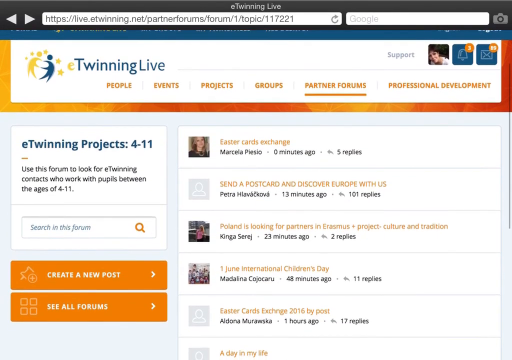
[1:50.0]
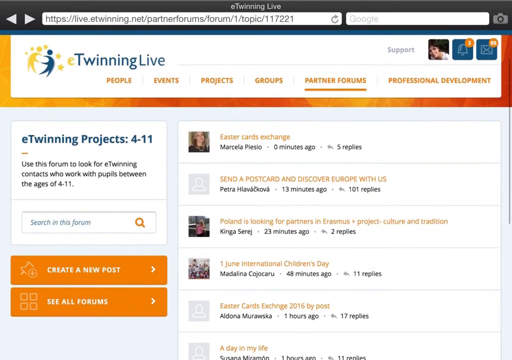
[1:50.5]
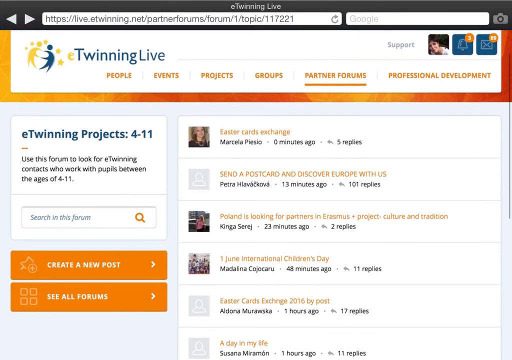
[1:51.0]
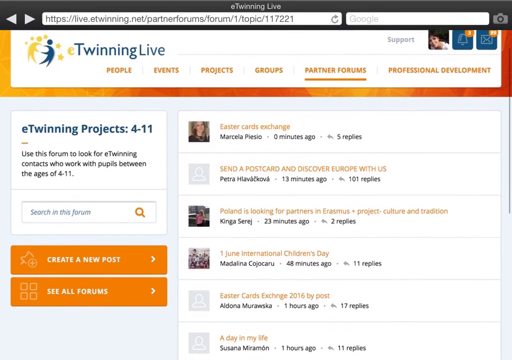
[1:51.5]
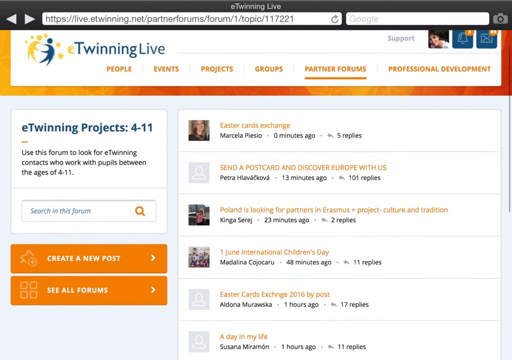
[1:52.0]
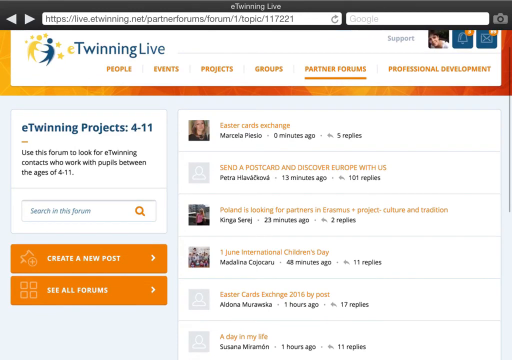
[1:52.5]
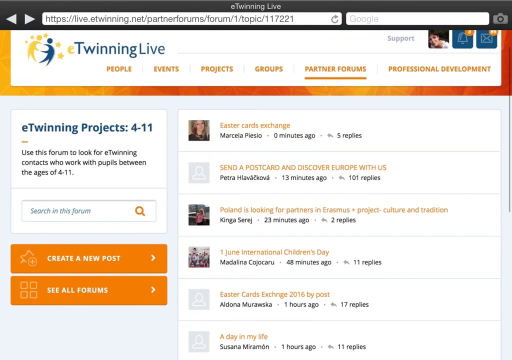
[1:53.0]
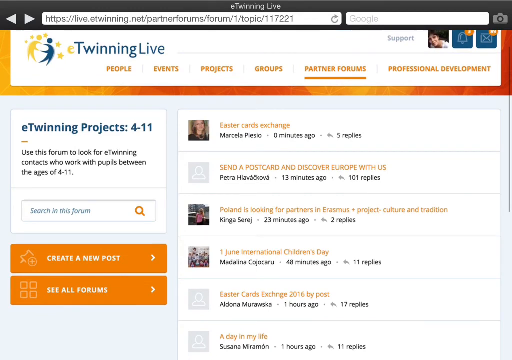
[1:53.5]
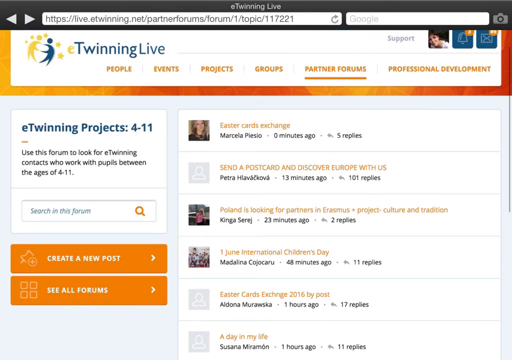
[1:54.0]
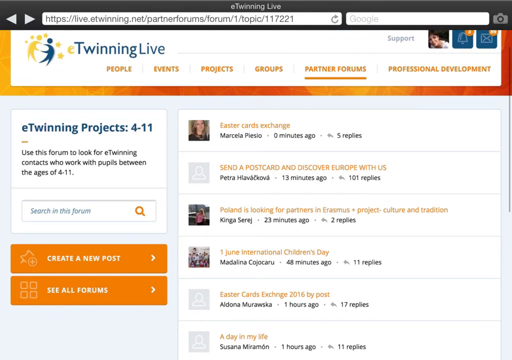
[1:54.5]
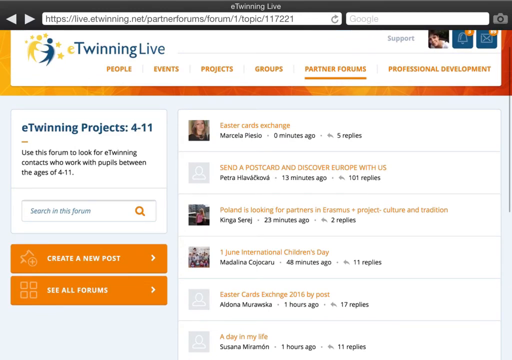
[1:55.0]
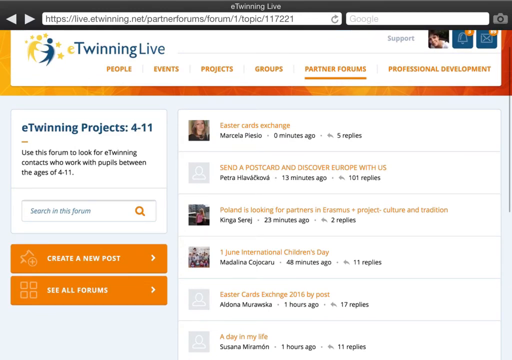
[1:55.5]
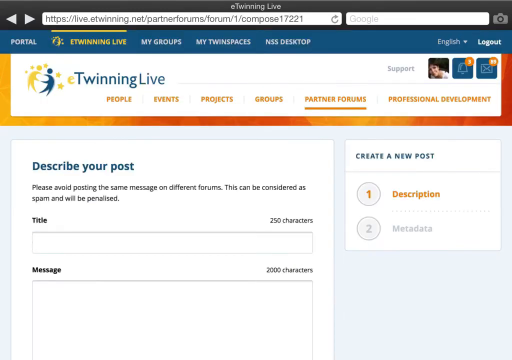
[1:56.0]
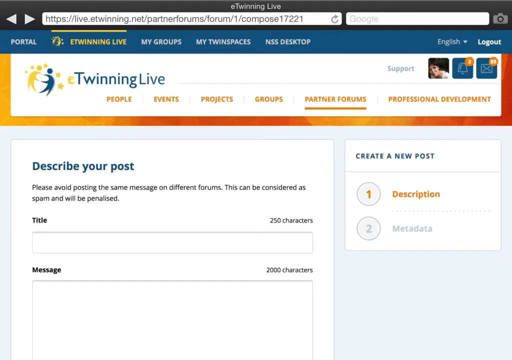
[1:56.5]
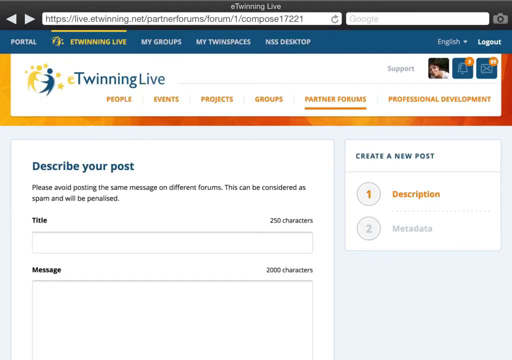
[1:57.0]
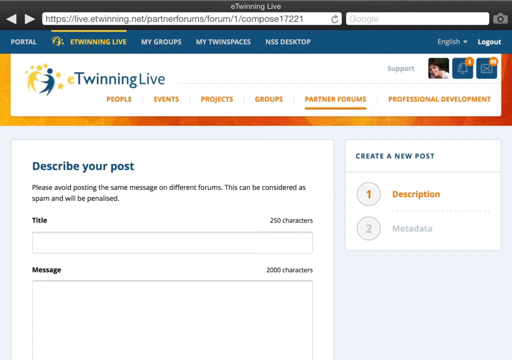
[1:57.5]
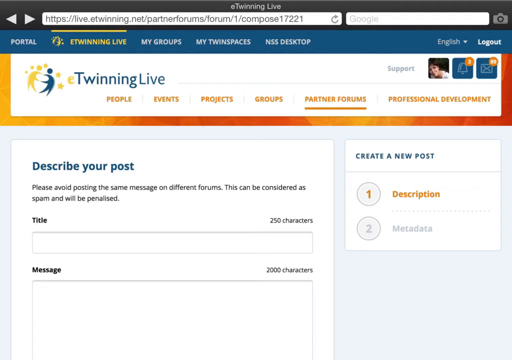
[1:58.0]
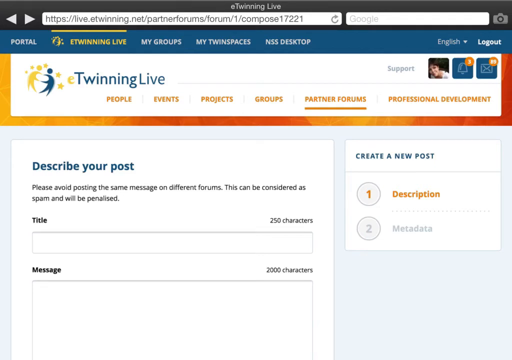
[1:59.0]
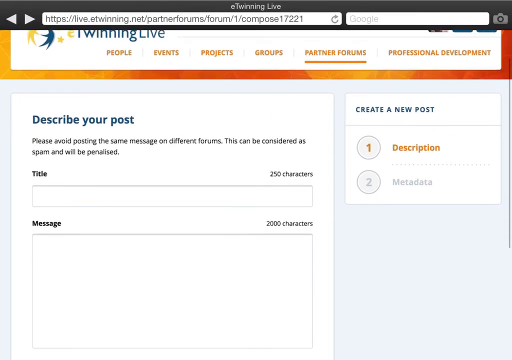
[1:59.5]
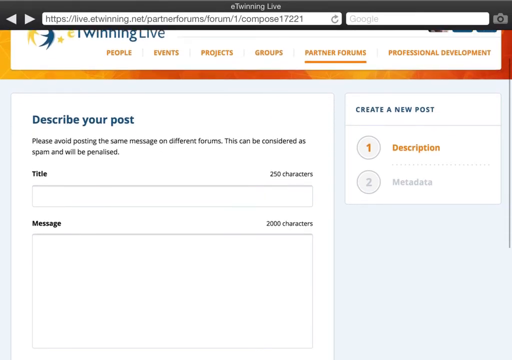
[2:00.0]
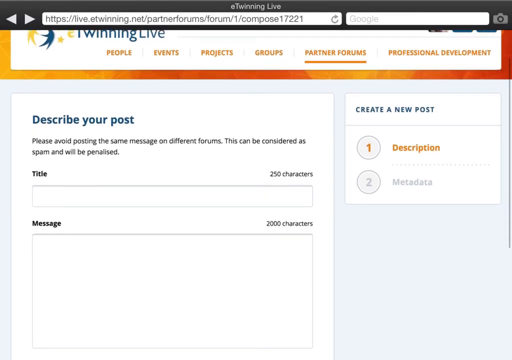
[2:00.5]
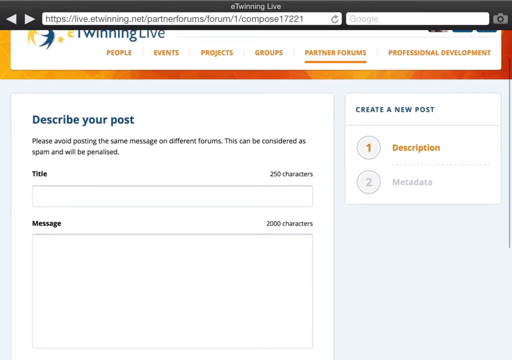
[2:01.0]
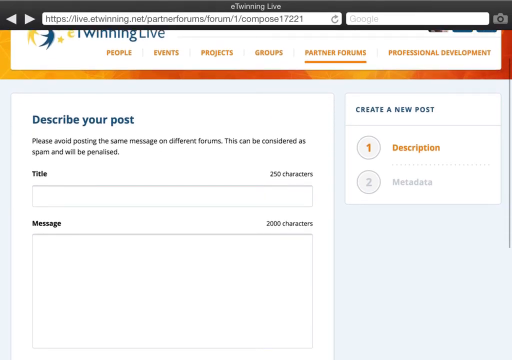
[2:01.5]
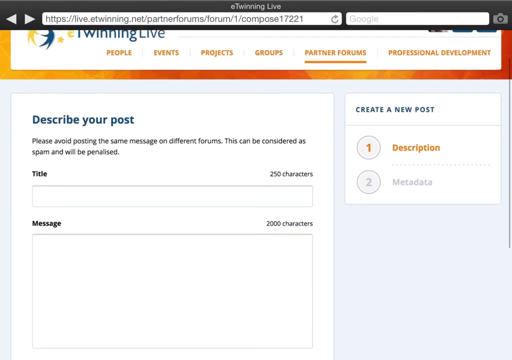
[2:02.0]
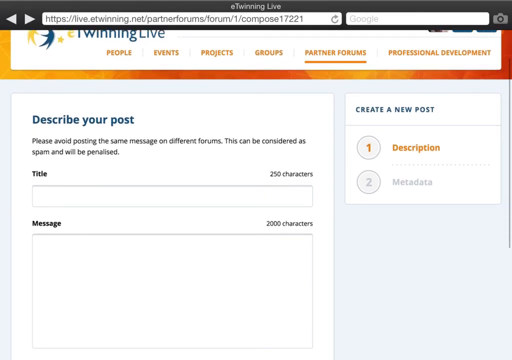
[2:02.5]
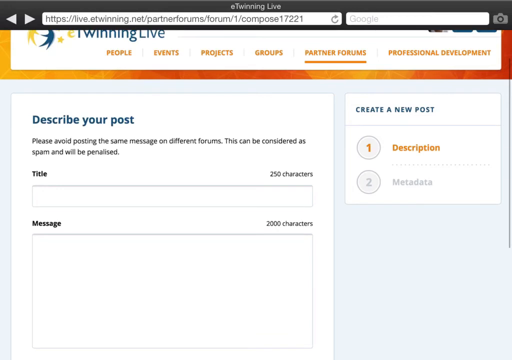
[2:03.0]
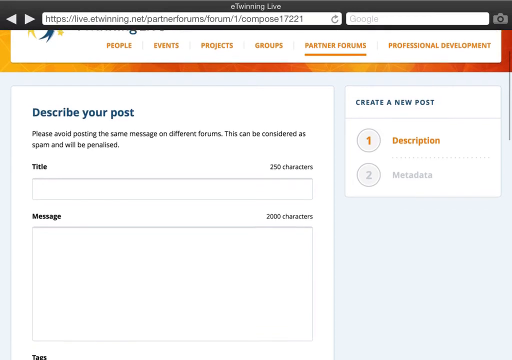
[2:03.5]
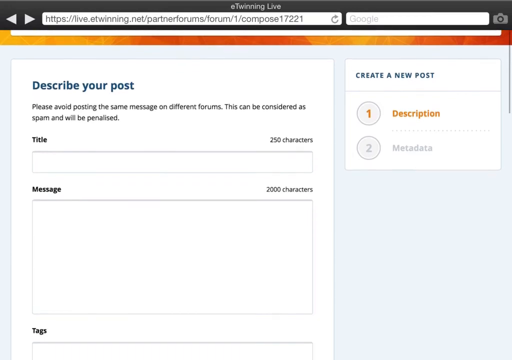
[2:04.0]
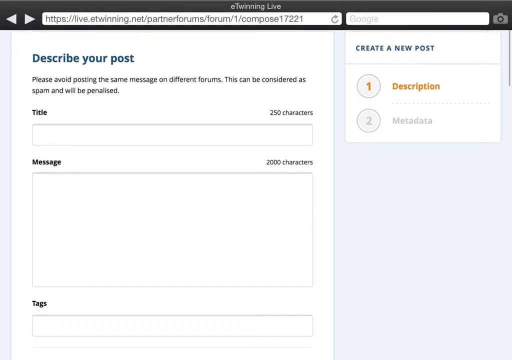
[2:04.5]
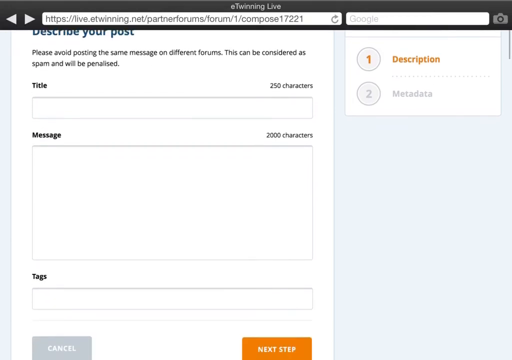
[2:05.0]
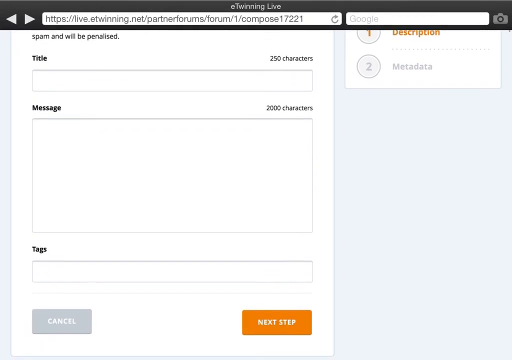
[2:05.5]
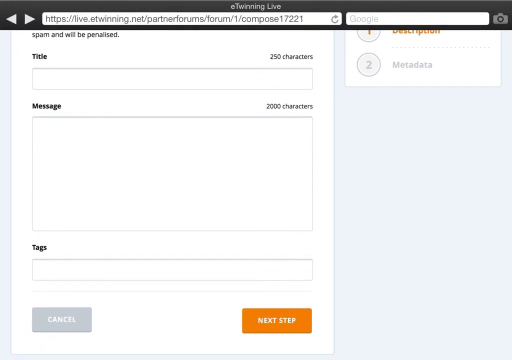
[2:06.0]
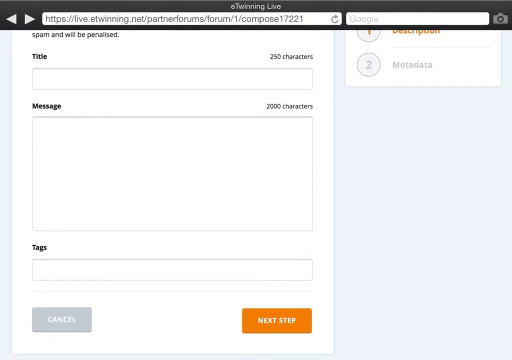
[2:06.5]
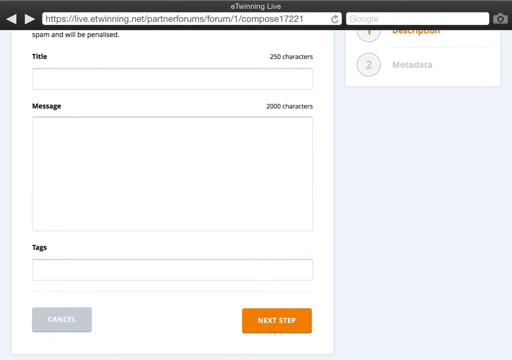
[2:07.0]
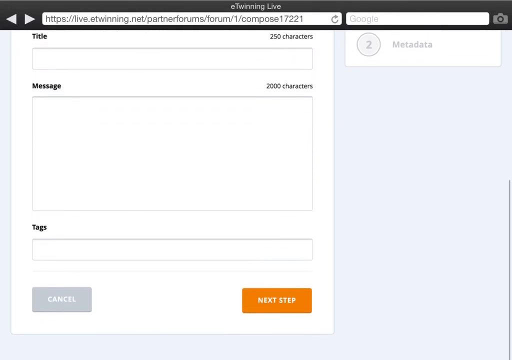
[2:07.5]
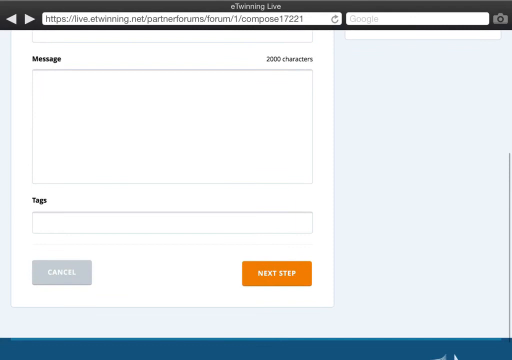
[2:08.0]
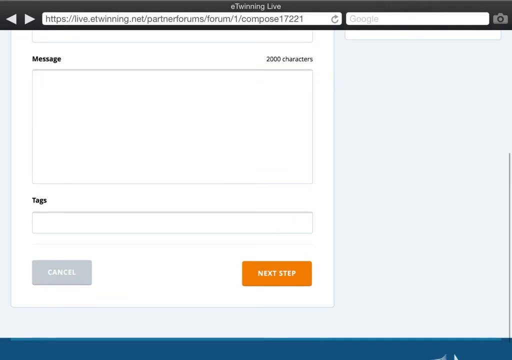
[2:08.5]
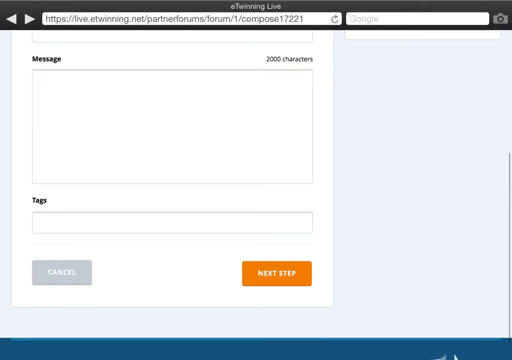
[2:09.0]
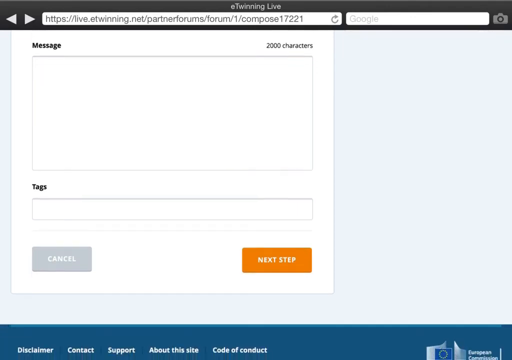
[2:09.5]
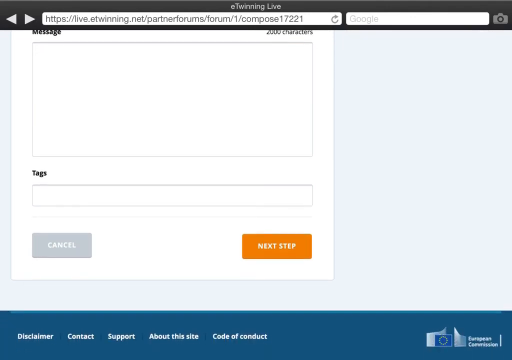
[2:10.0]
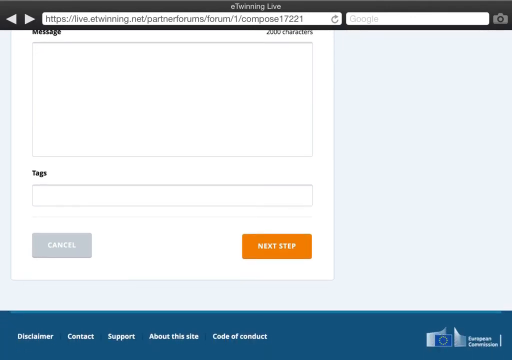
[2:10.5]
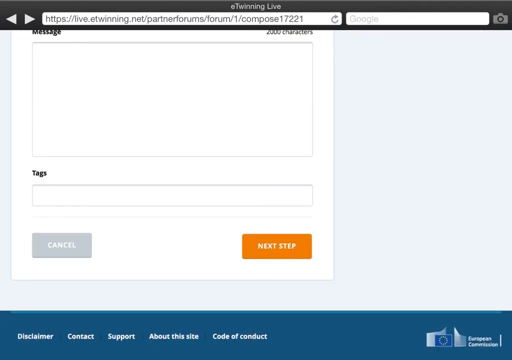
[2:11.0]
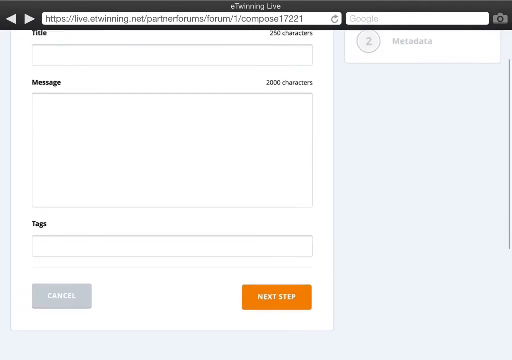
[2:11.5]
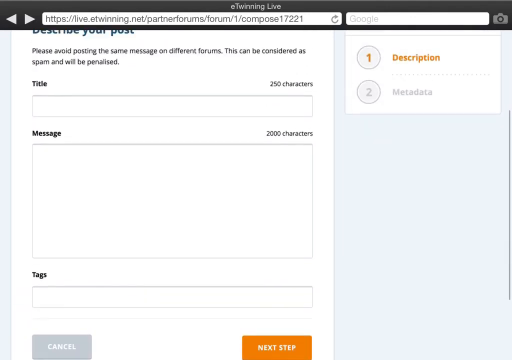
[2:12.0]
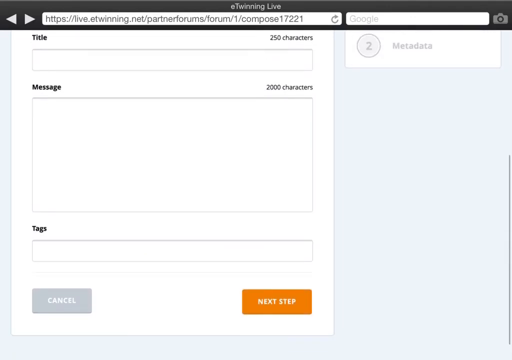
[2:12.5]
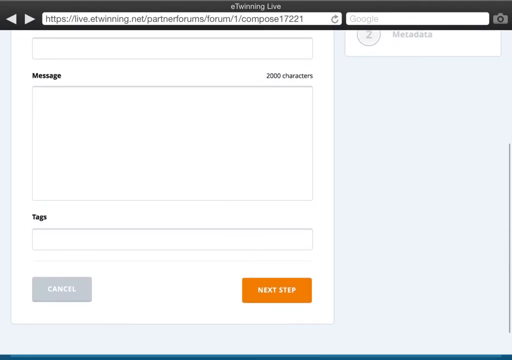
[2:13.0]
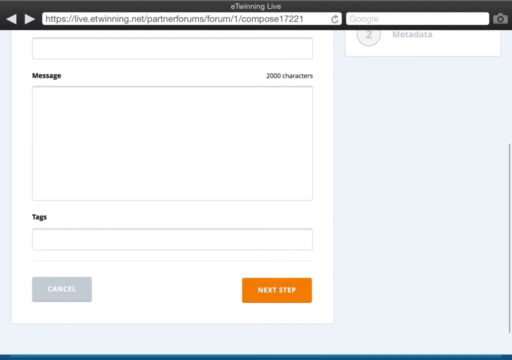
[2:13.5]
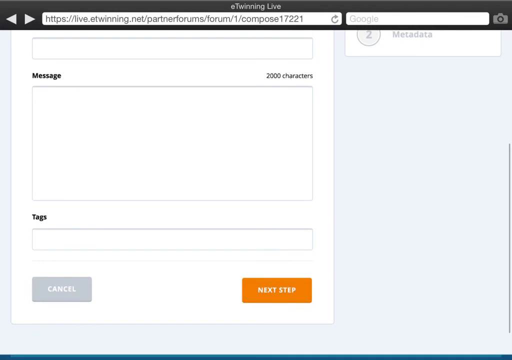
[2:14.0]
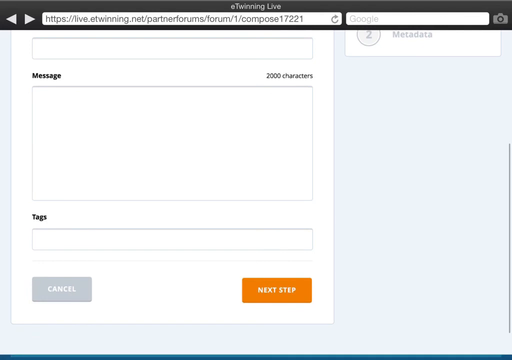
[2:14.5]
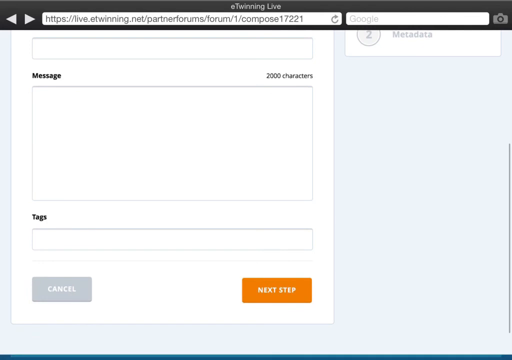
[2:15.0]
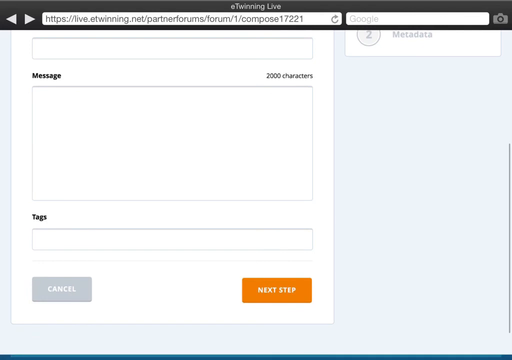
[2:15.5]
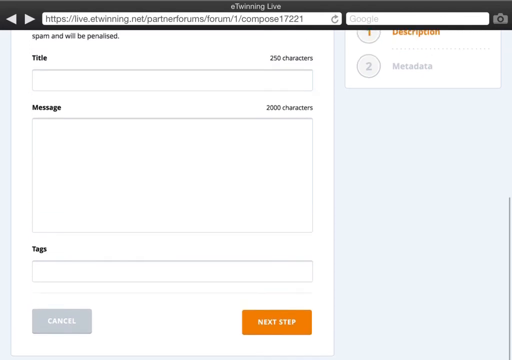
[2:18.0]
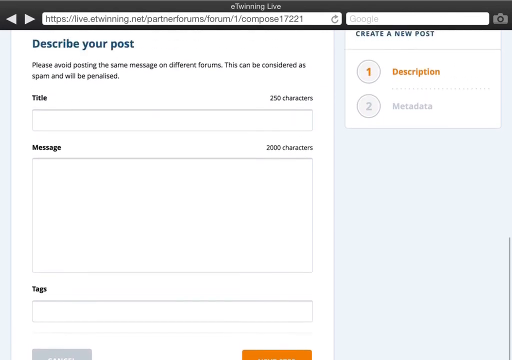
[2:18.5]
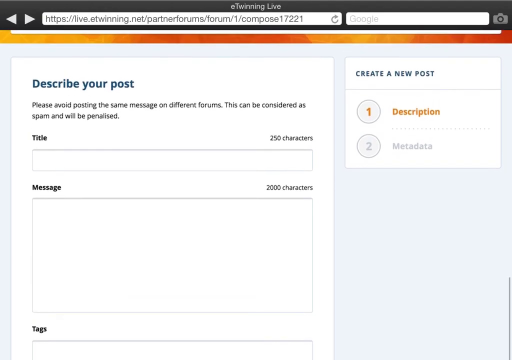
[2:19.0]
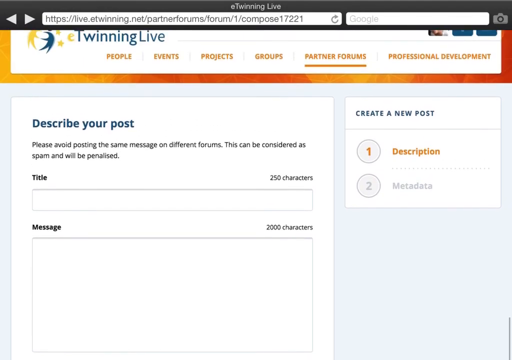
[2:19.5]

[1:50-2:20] The user is back on the eTwinning Projects 4-11 screen, scrolls slowly and clicks on Create a New Post. On the left half of the screen is a large white box that says "Describe Your Post", with spaces for the title, the message and tags. At the bottom are a gray button on the left that says "Cancel" and an orange one on the right of the box that says "Next Step". On the right side of the white box there is a description and metadata, possibly for entering tags and location. The user scrolls all the way to the bottom, where a blue bar shows different categories and a few other tabs. Text says "Describe your post, please avoid putting the same message on different forums, this can be considered a spam and will be penalized." Toward the end, the user apparently clicks back onto Partner Forms, returning to the previous page.